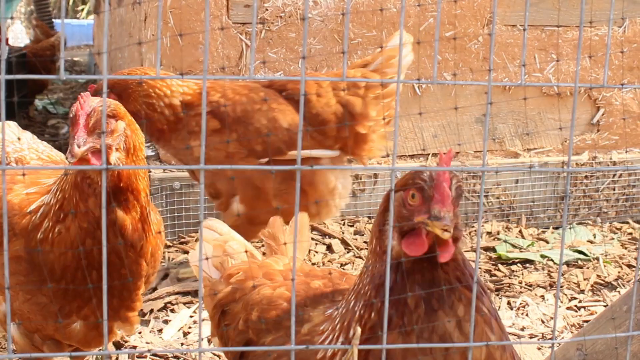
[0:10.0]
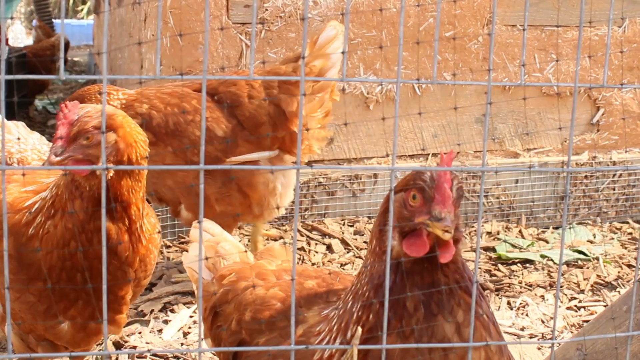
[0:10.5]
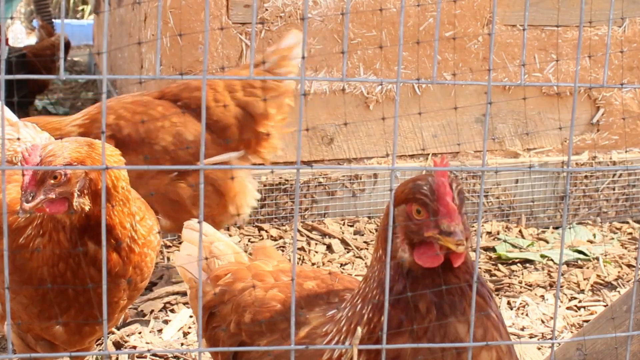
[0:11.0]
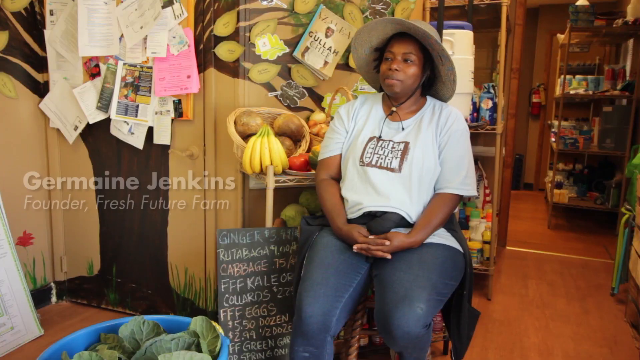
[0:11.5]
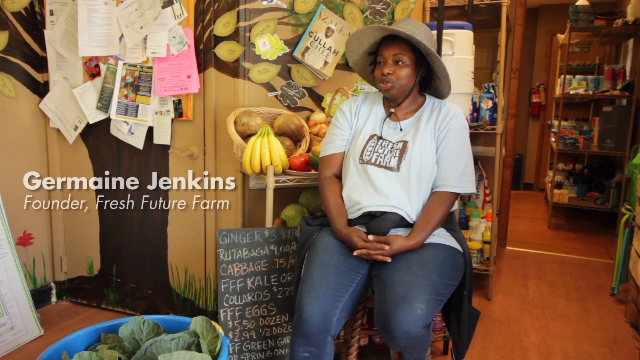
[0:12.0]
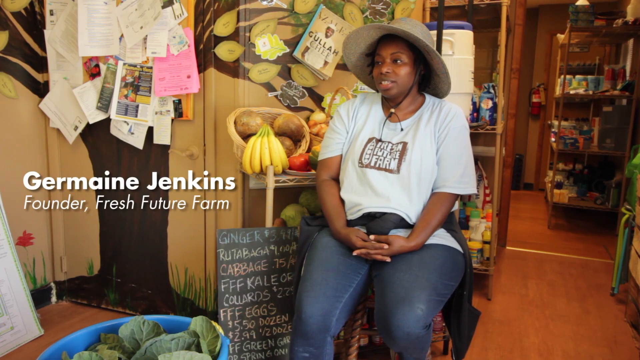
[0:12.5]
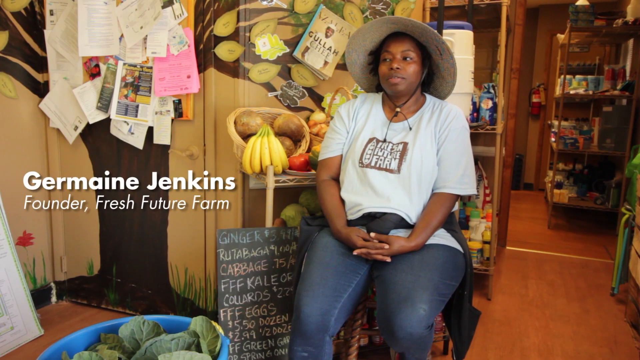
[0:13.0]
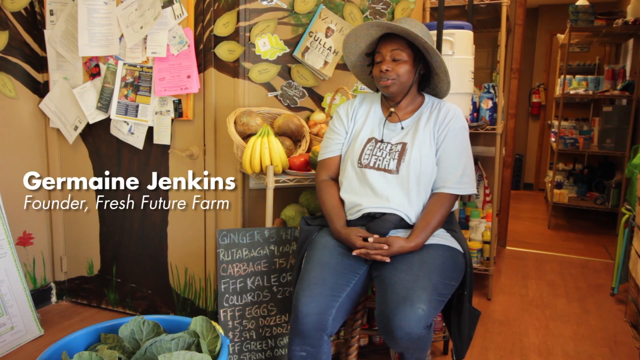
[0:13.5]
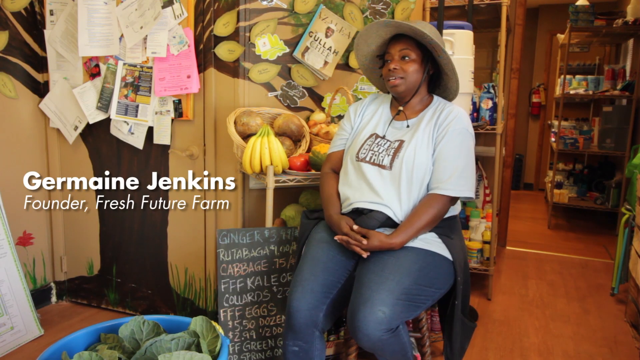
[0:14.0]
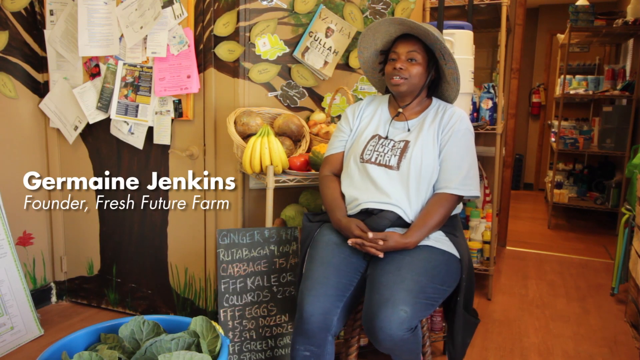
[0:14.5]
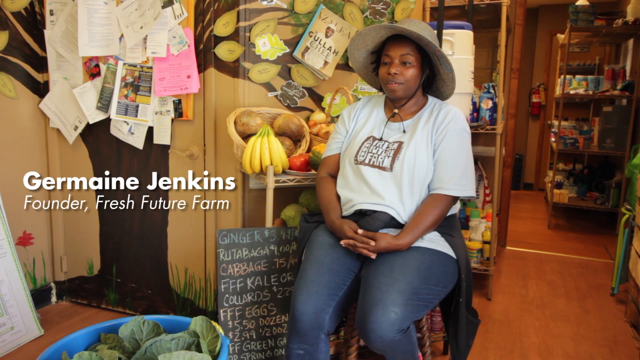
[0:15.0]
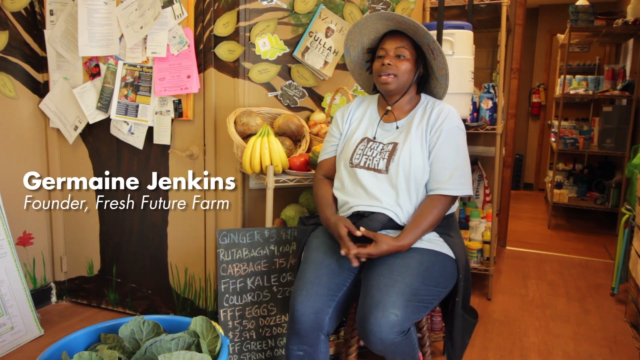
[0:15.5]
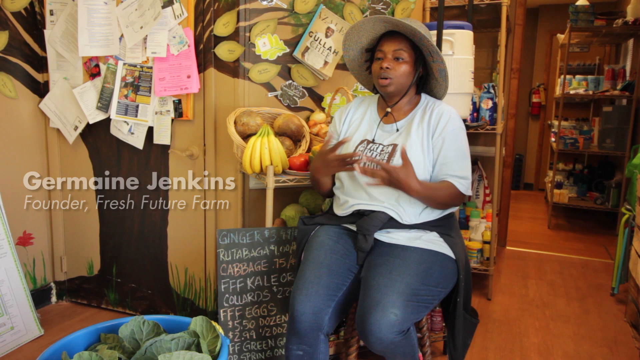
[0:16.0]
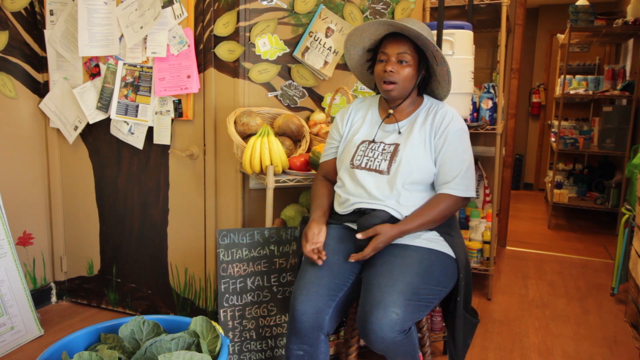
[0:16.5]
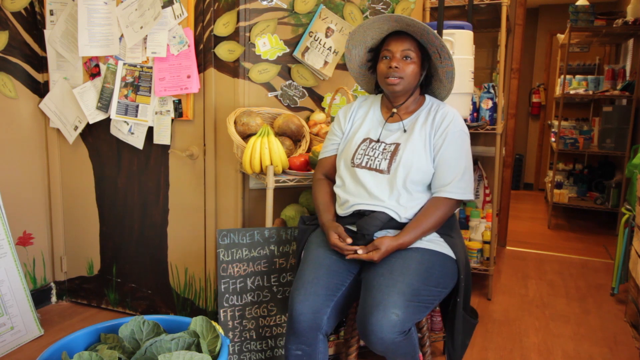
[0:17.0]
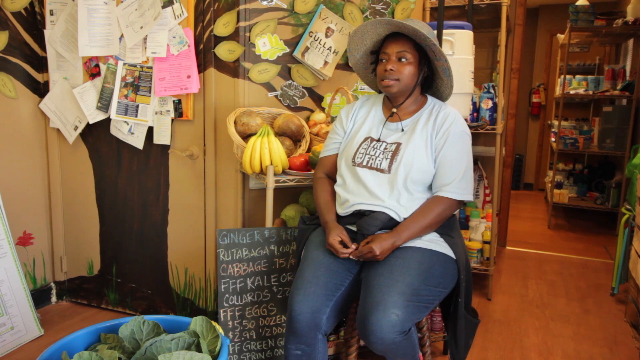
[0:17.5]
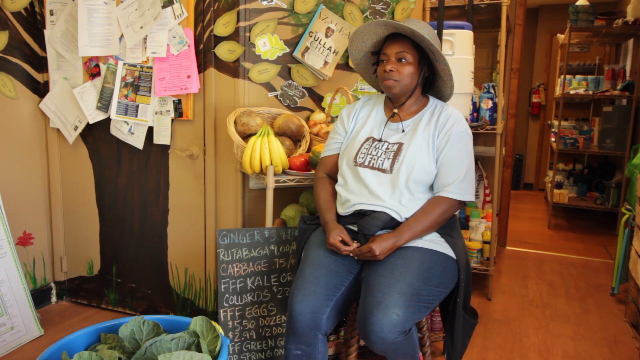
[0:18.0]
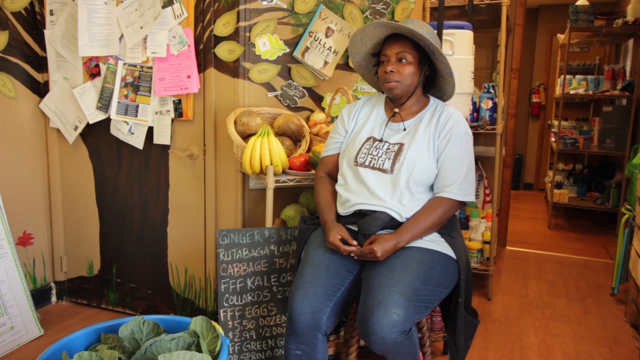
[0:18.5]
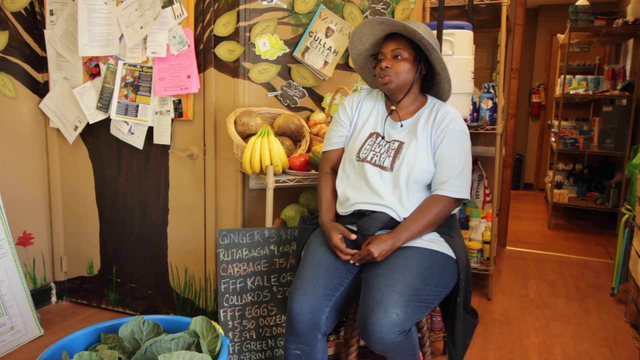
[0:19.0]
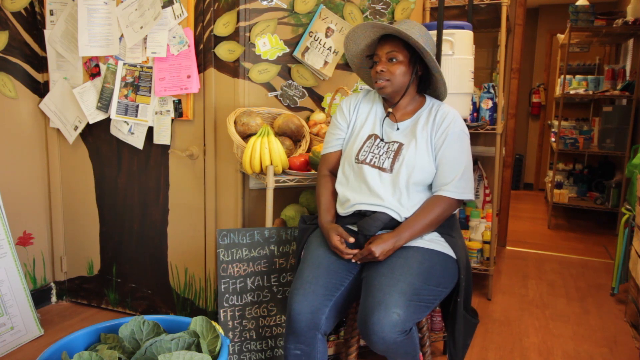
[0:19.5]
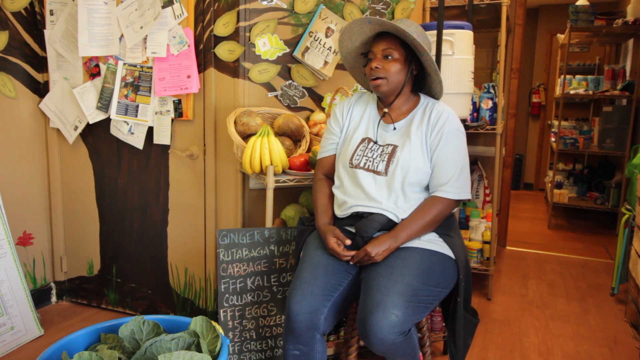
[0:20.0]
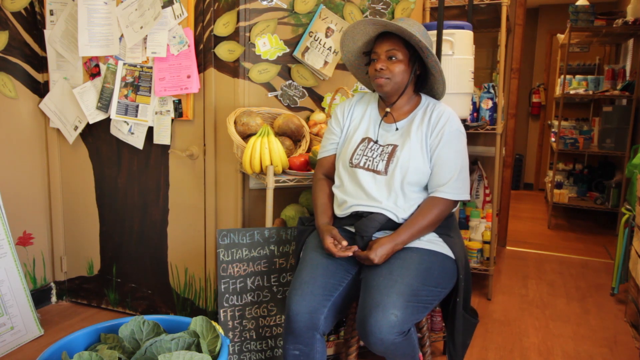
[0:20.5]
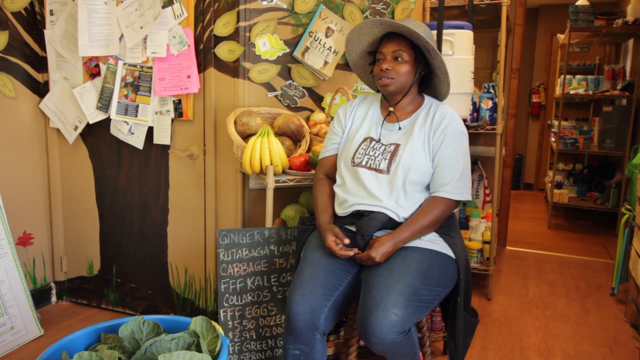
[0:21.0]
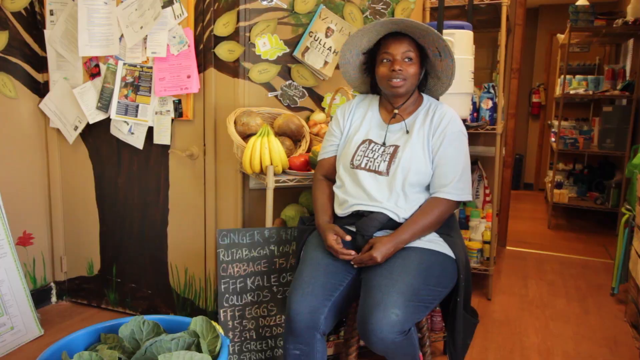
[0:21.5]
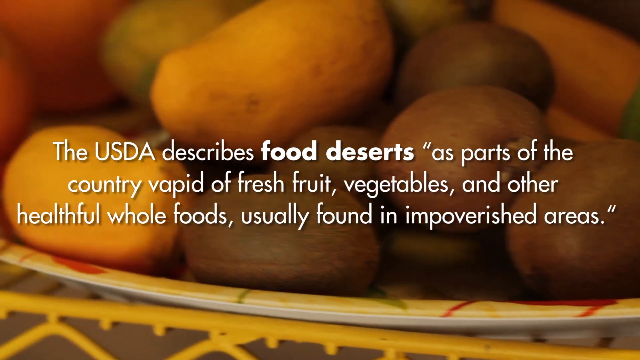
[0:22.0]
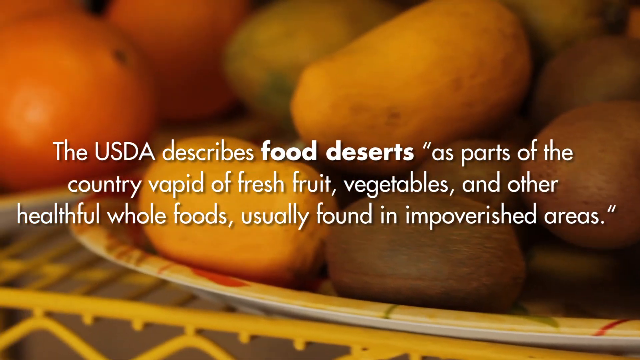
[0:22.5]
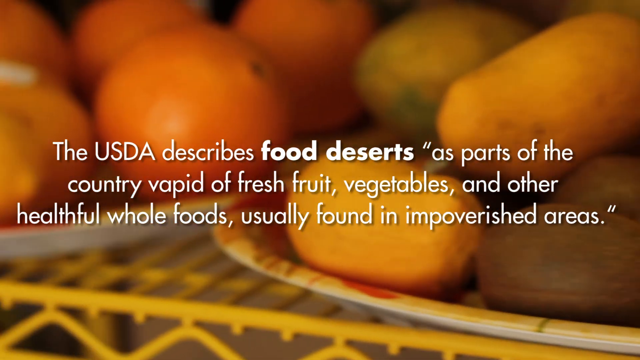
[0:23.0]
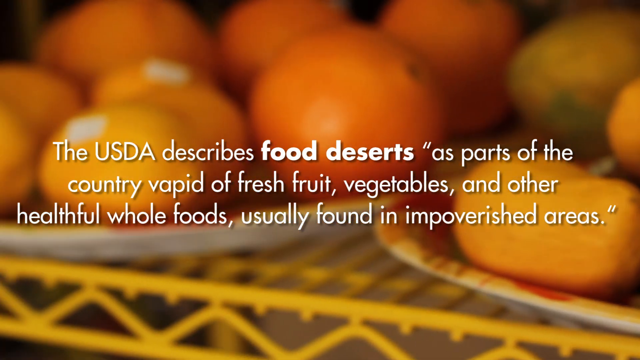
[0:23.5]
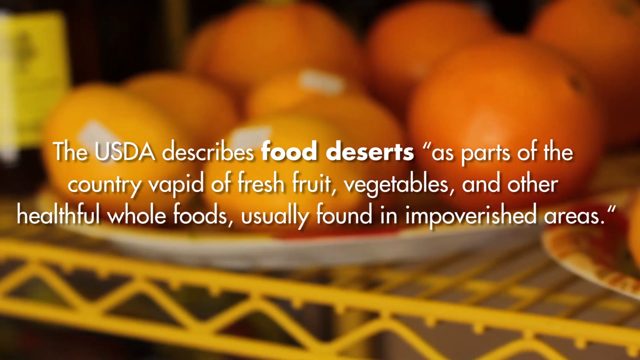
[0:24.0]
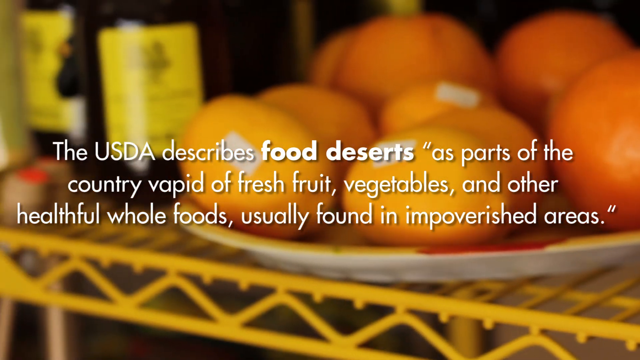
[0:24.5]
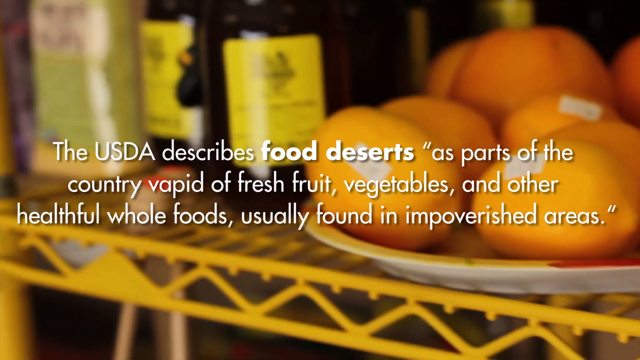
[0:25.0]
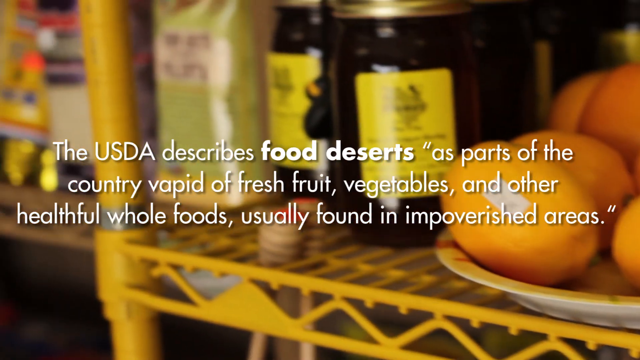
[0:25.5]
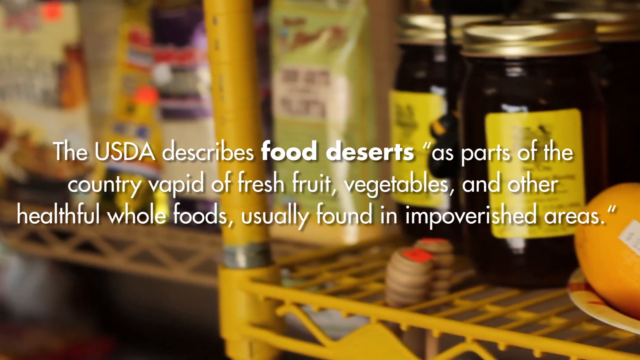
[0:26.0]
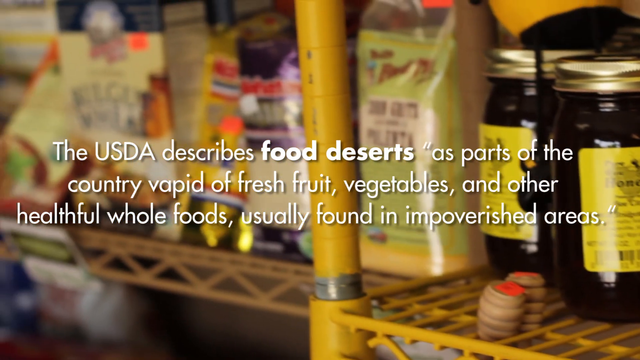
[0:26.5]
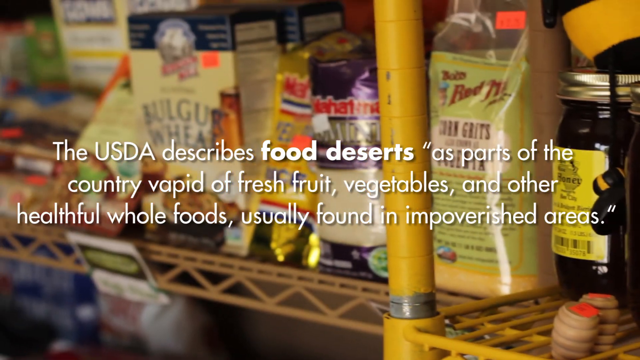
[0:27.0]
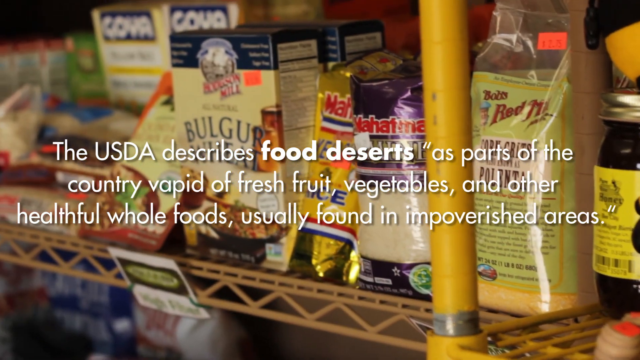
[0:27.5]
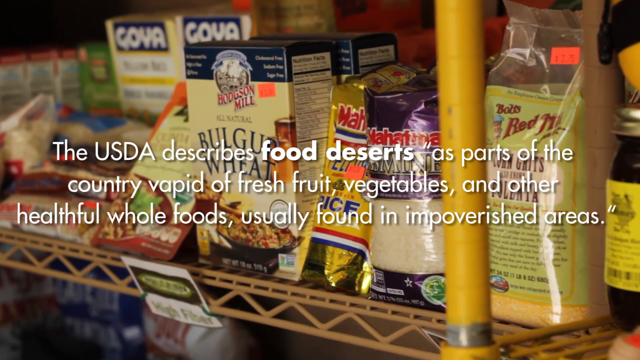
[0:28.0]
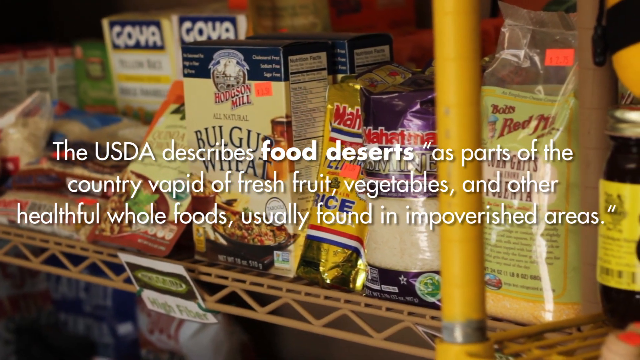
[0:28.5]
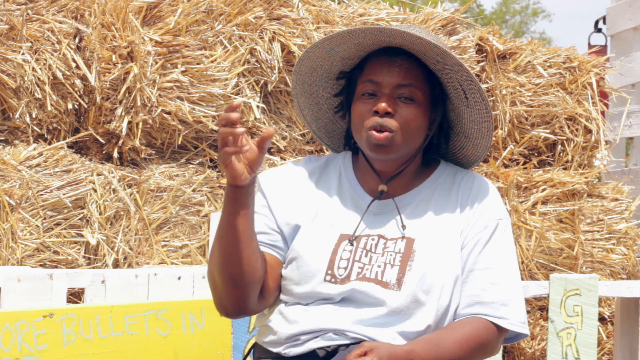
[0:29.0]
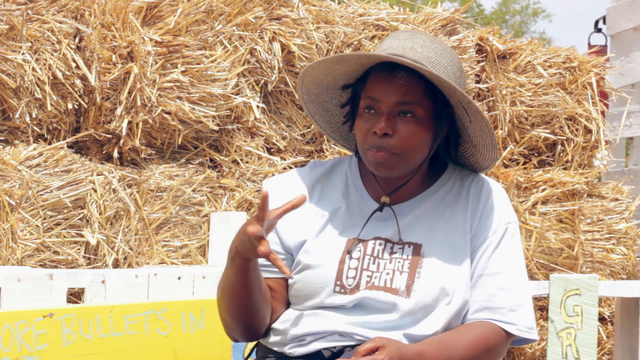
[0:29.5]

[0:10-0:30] The chickens continue to appear behind chicken wire in a chicken coop before the scene transitions to the inside of a building with fresh fruit and produce. White text reads "Jermaine Jenkins, founder of the Fresh Future Farm." Produce and areas around the farm are shown, and this woman is seen inside with some bananas behind her. A blackboard lists some of the produce grown on the farm, including kale, cabbage, rutabaga, ginger, and eggs. Another screen shows various produce in the background with white text that says "The USD describes food deserts as parts of the country vapid of fresh fruit, vegetables, and other healthy whole foods usually found in impoverished areas." The shots mainly show this black woman in a hat, a white shirt, and blue jeans.